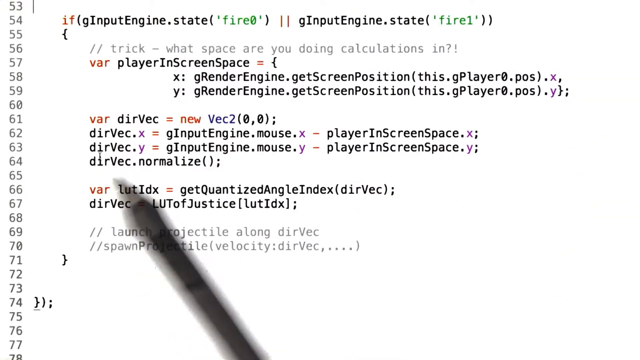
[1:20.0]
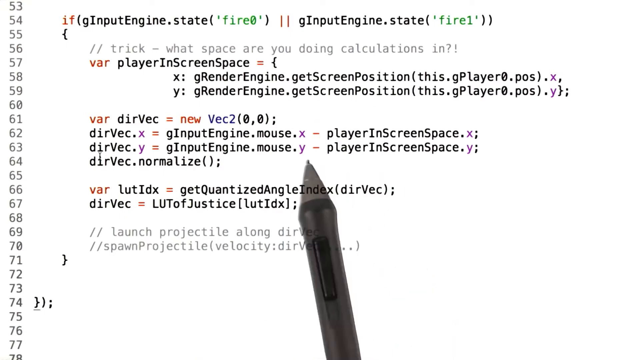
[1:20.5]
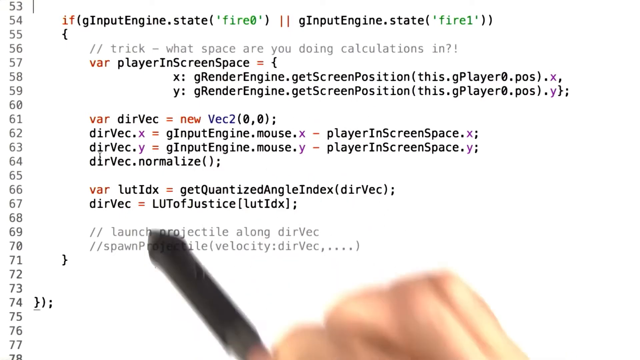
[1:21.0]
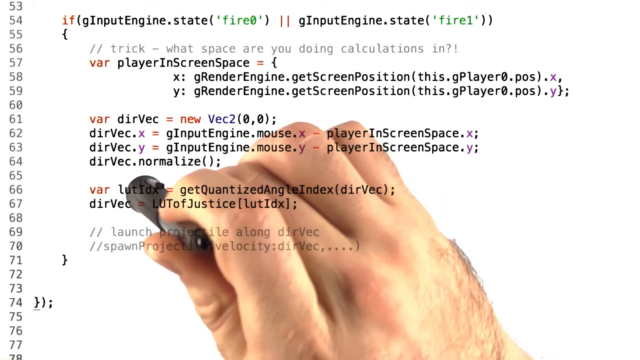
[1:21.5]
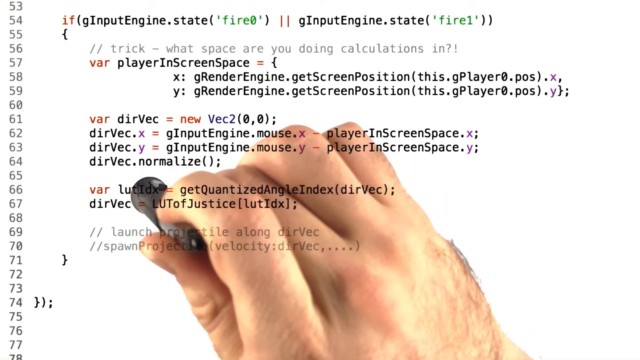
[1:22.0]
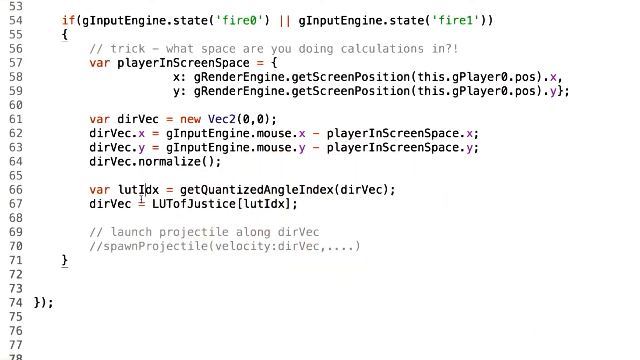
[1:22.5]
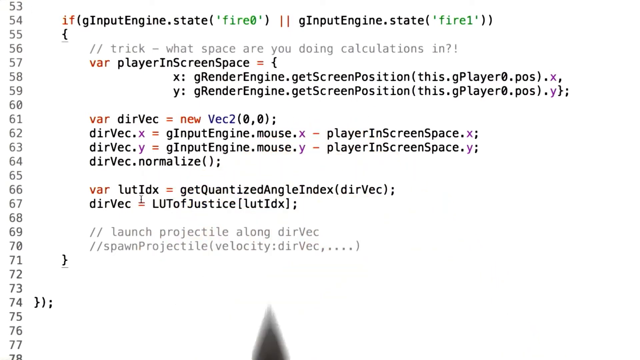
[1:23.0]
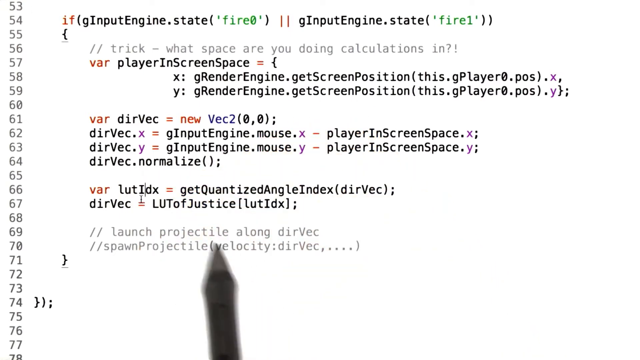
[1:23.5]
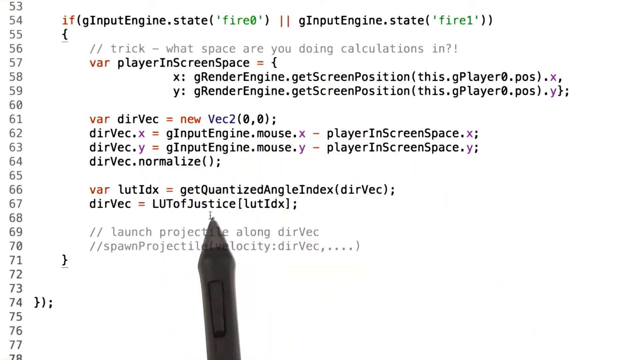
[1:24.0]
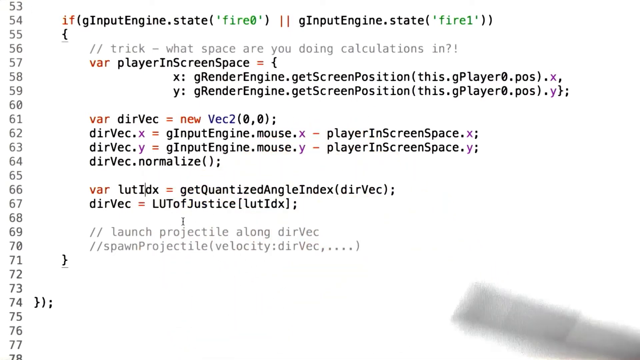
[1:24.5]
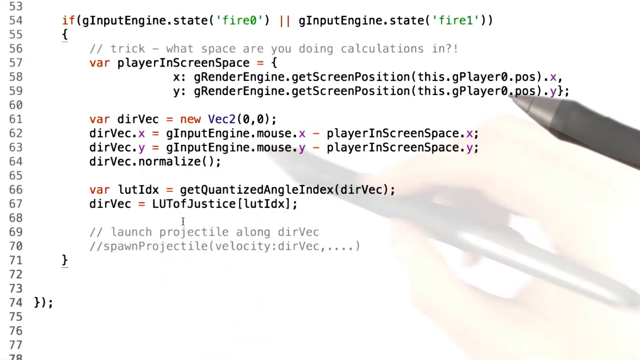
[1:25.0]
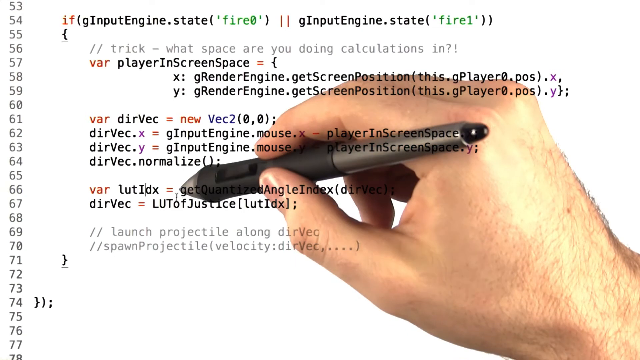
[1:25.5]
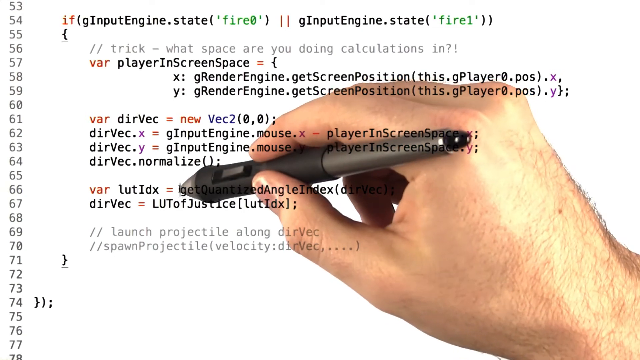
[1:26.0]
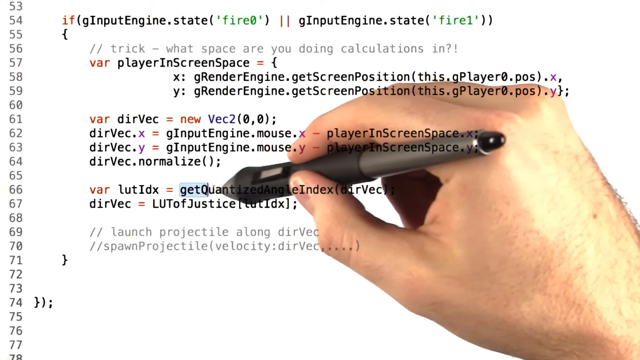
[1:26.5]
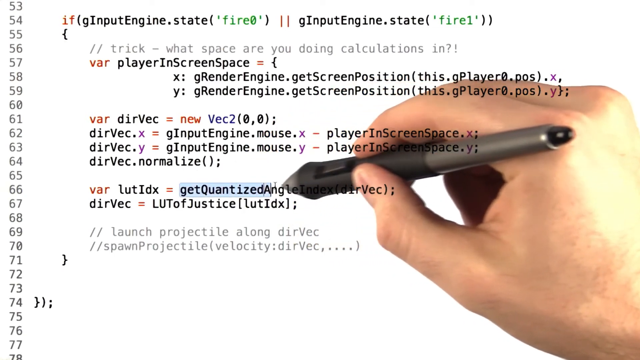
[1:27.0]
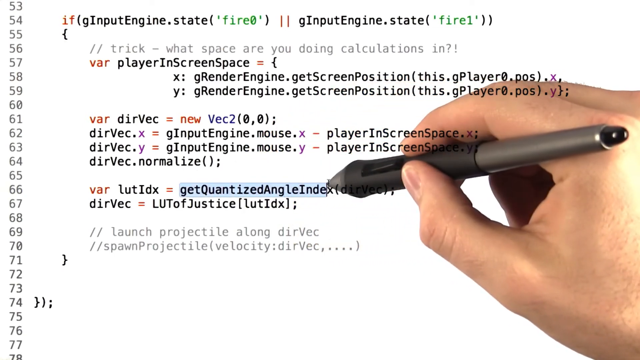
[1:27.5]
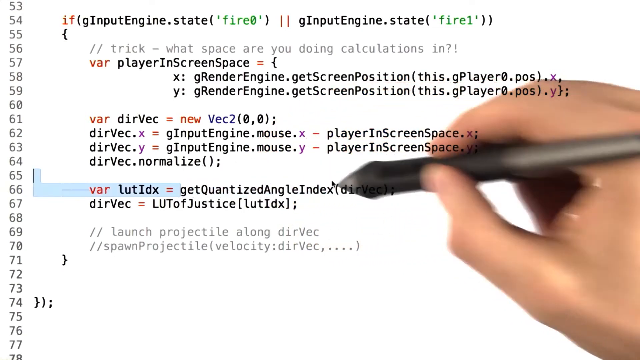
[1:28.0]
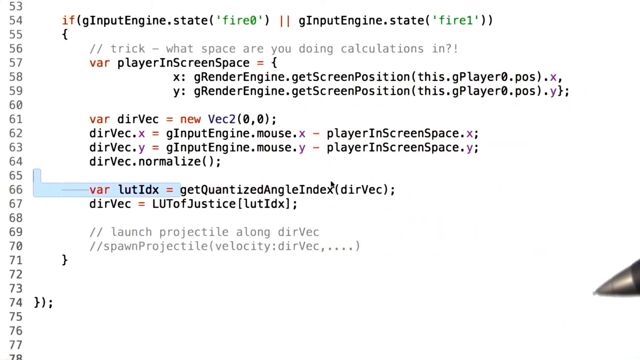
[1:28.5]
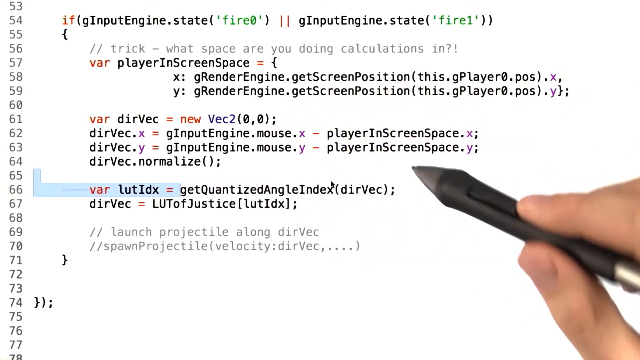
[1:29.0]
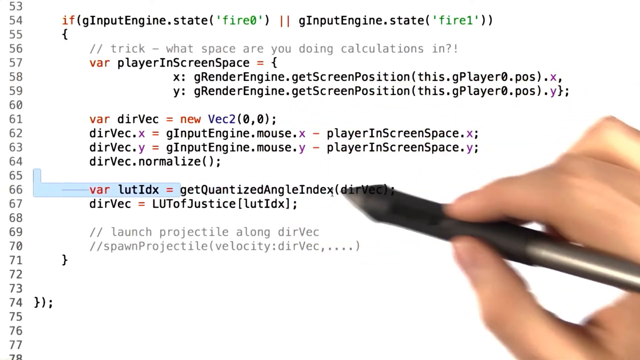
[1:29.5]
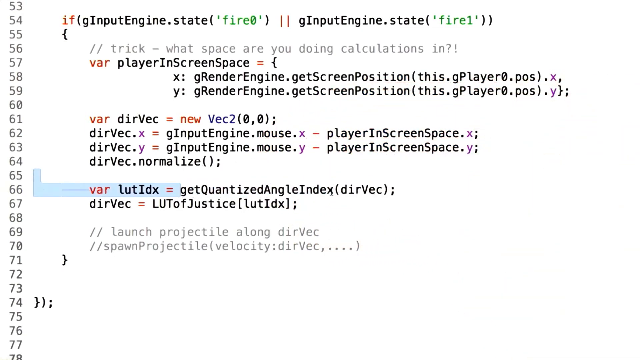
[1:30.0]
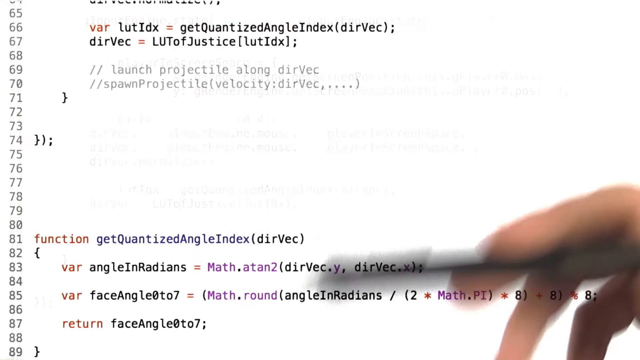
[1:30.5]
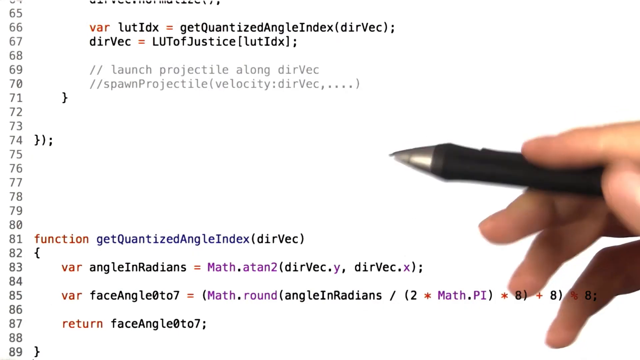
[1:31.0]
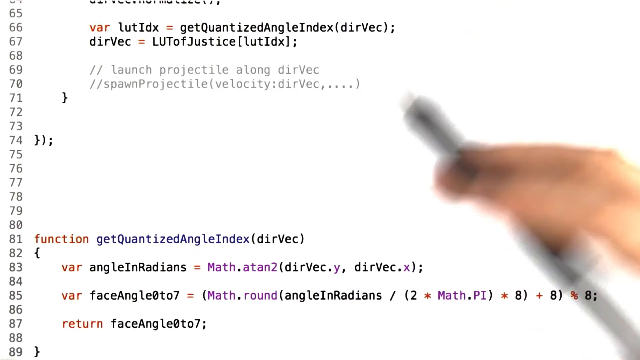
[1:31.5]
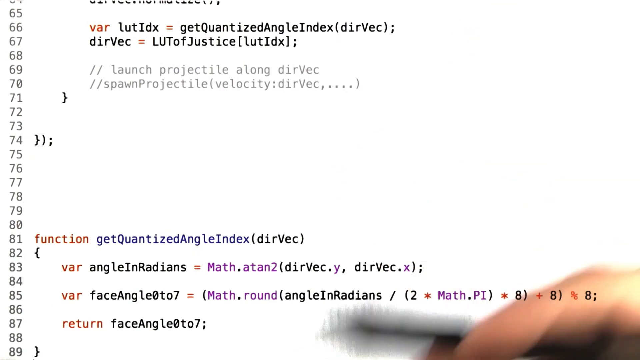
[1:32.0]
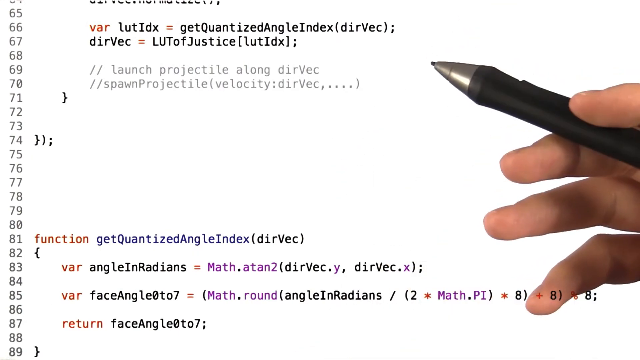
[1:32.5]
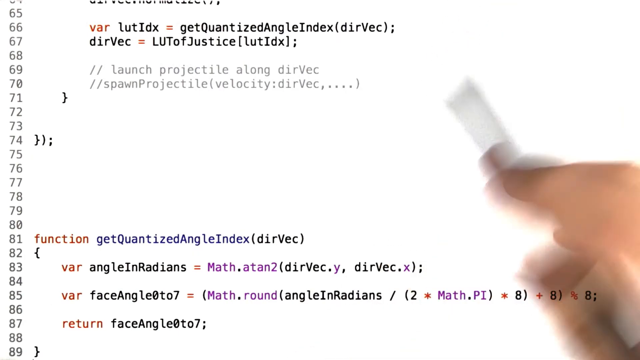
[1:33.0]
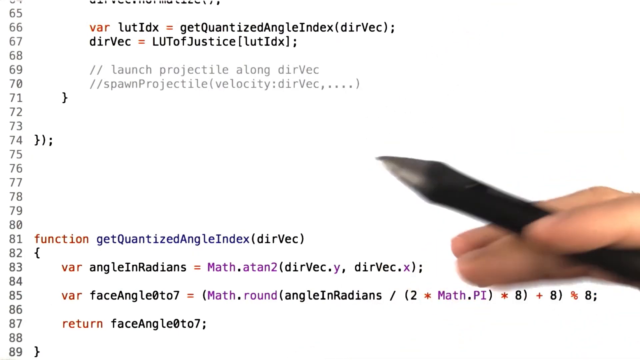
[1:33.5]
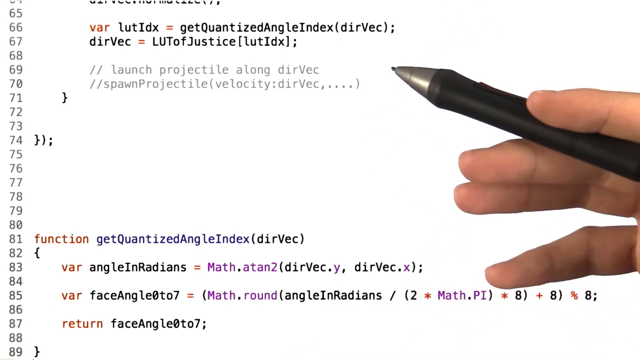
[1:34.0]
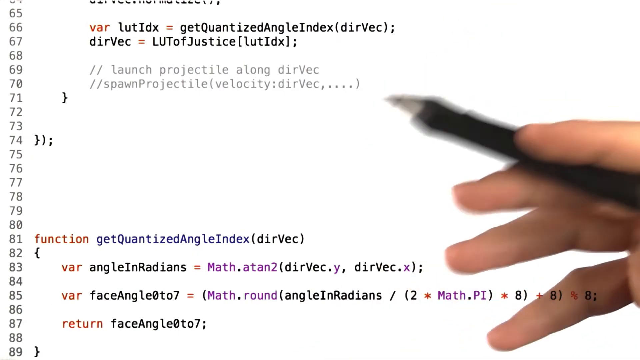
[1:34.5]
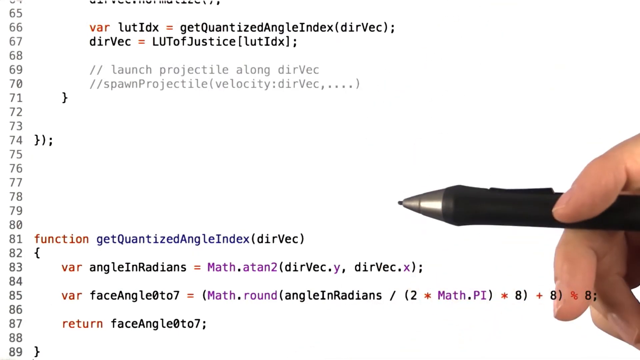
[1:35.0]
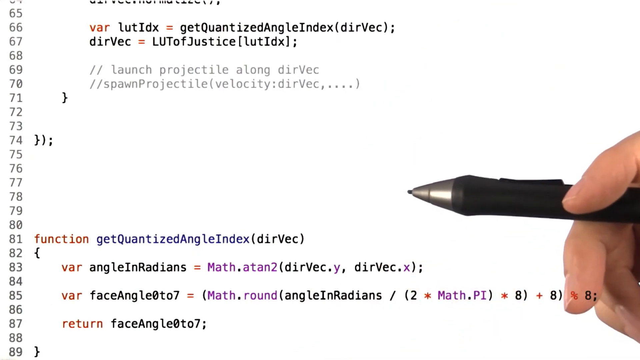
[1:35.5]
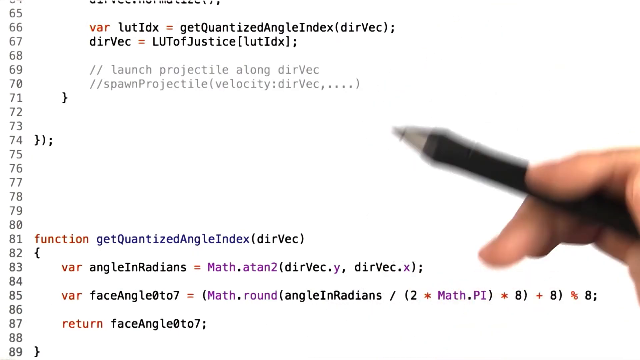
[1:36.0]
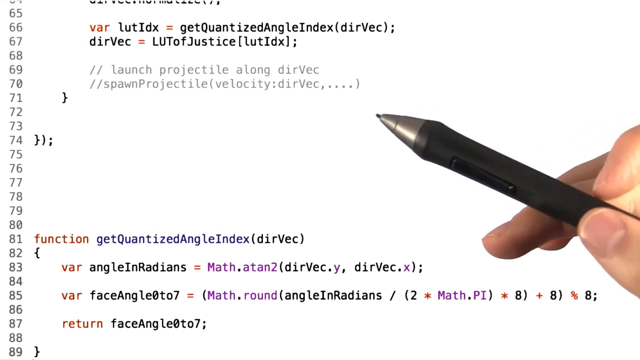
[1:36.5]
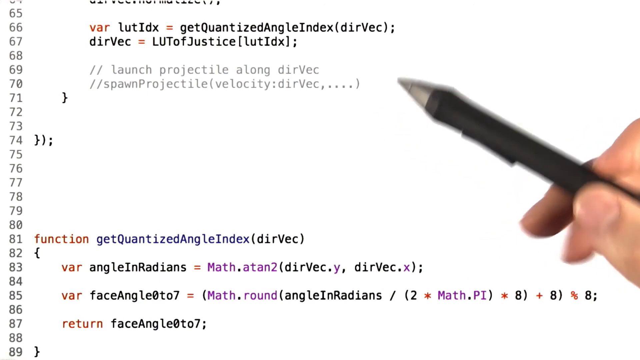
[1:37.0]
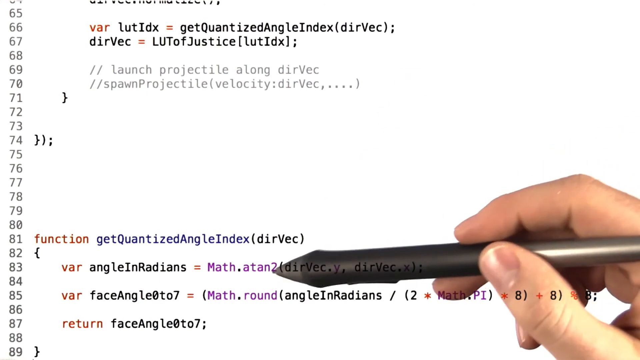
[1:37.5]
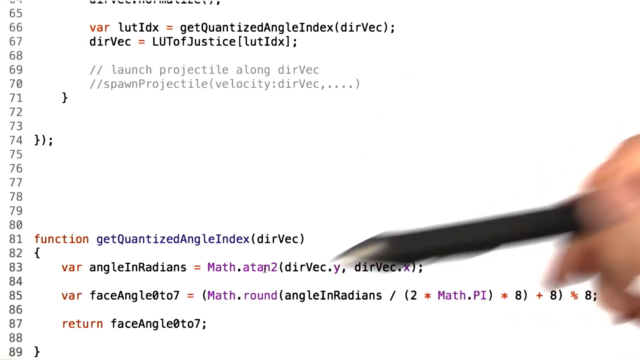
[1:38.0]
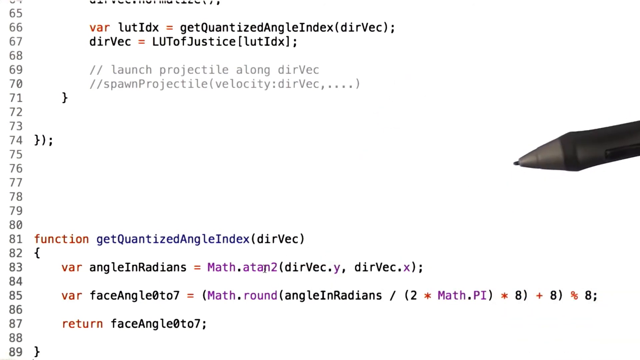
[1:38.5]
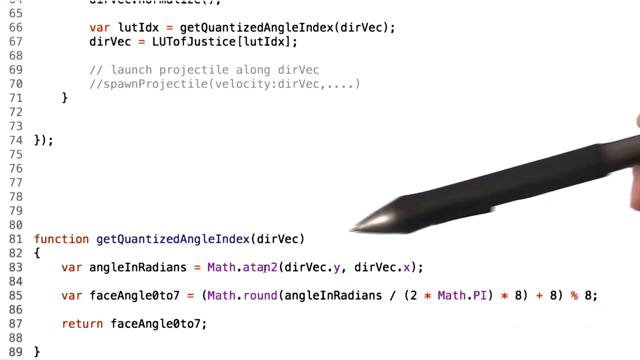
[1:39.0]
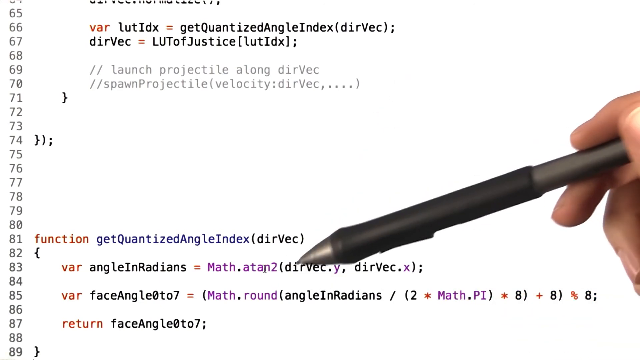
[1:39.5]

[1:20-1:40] A humanoid hand holding a mechanical pencil or stylus points at different lines of code, which run from line 65 to 87. Lines 65 through 70 form one section of code, lines 71 through 80 are spacing, and there is an additional section at line 81. Line 81 seems to be centered around a function with different angle variables in focus, taking the direction vector from the player to the mouse as its input. Line 83 calculates an angle using the ATAN2 trigonometric function to get the angle of the input vector in radians. Line 85 is the quantization formula. Lines 69 and 70 are a label for "launch projectile along dirVec" and "spawn projectile velocity."